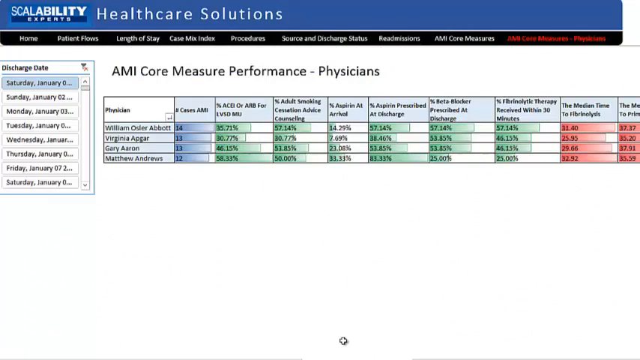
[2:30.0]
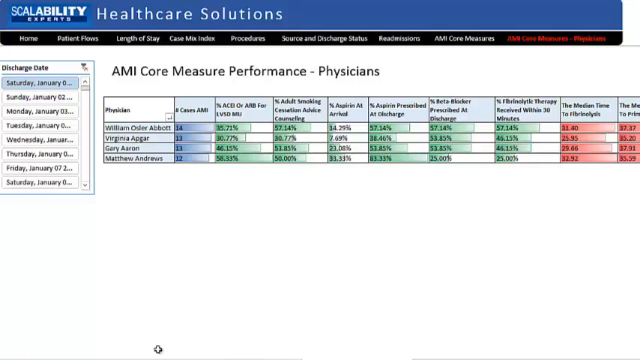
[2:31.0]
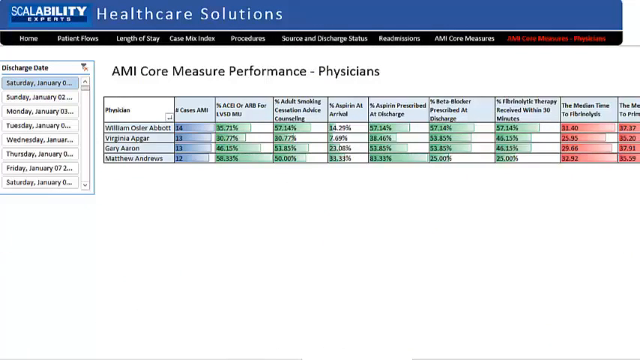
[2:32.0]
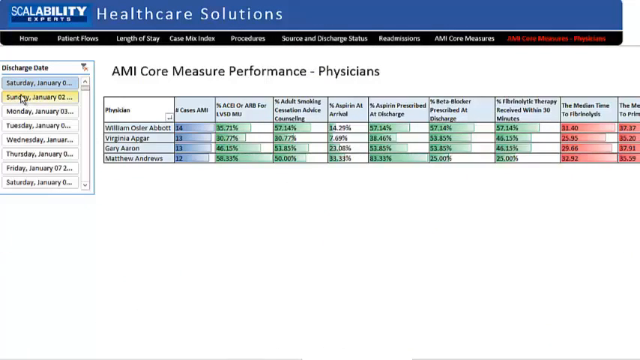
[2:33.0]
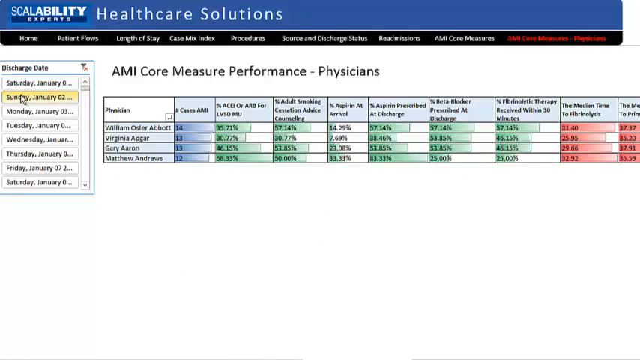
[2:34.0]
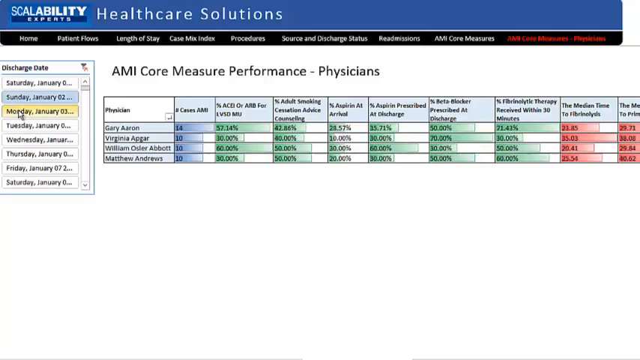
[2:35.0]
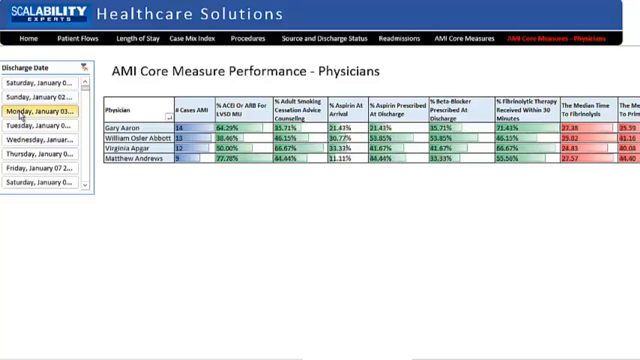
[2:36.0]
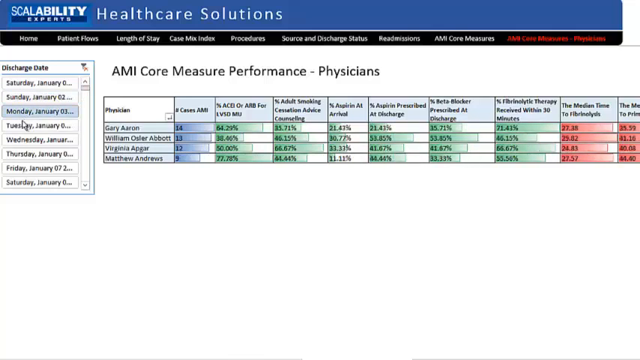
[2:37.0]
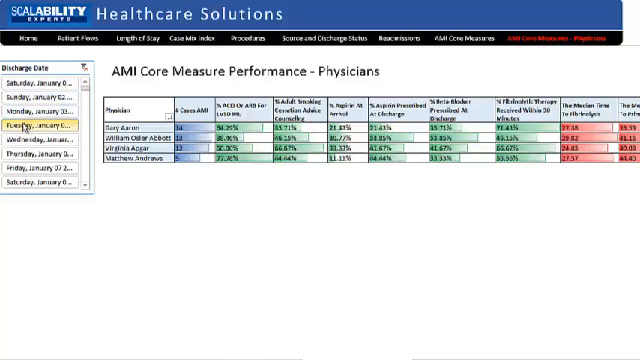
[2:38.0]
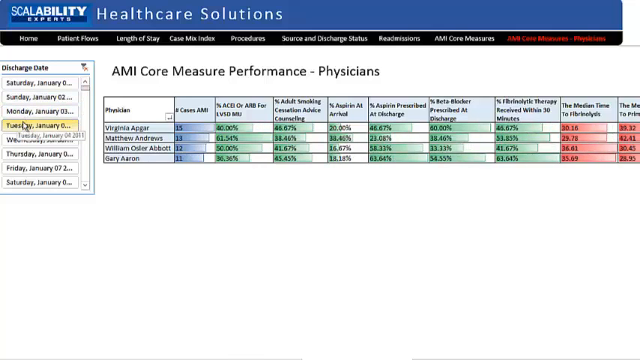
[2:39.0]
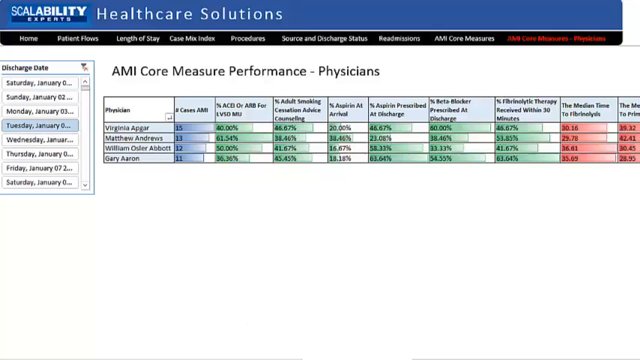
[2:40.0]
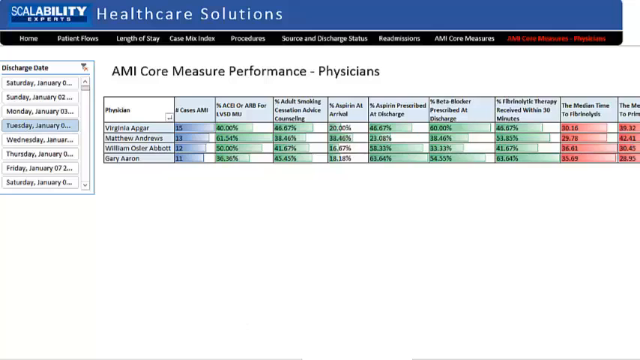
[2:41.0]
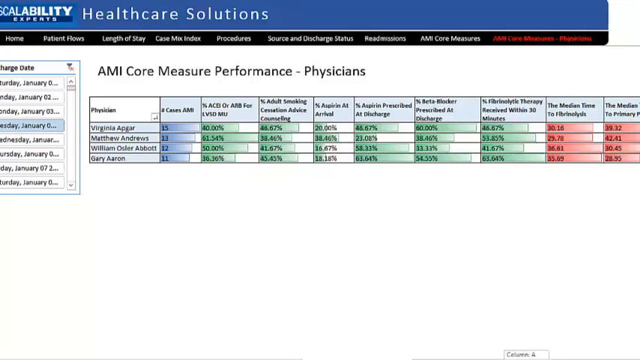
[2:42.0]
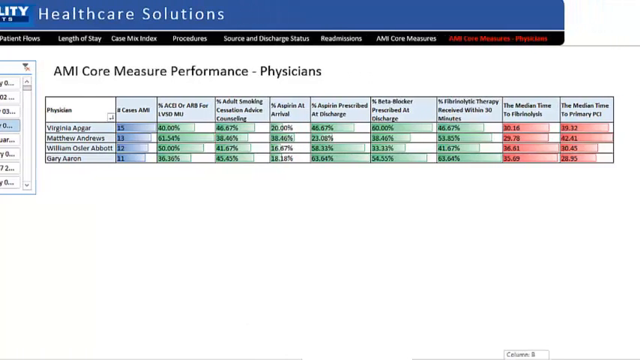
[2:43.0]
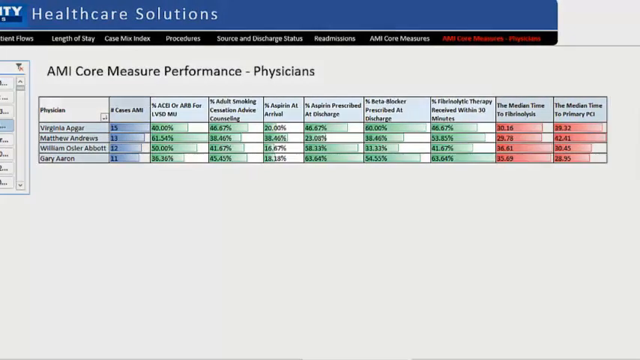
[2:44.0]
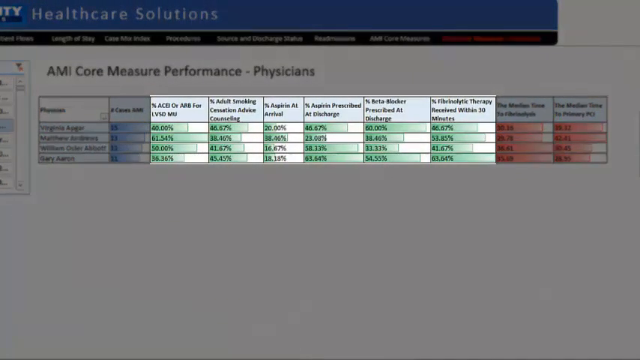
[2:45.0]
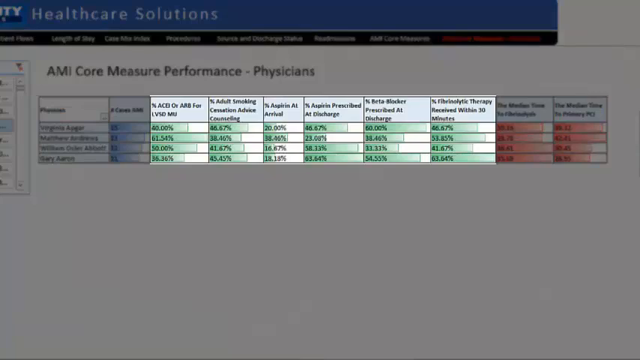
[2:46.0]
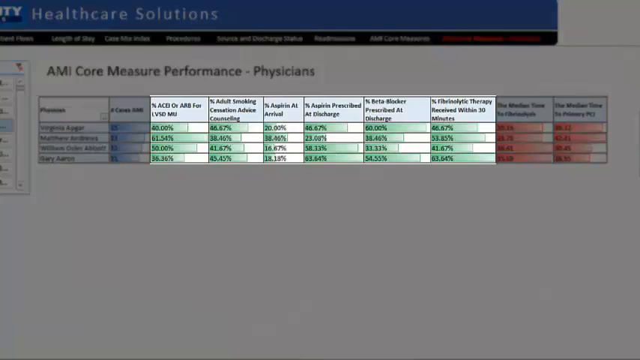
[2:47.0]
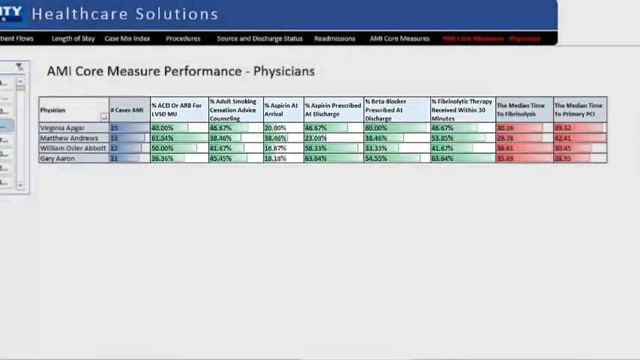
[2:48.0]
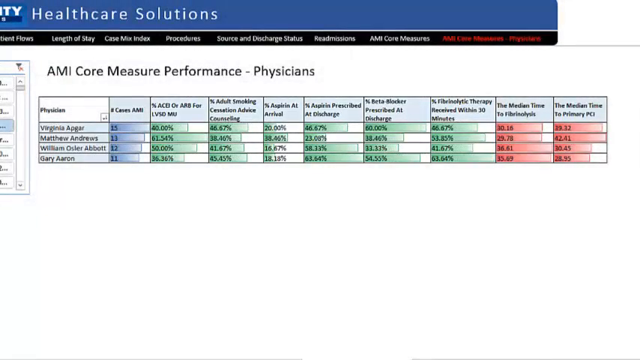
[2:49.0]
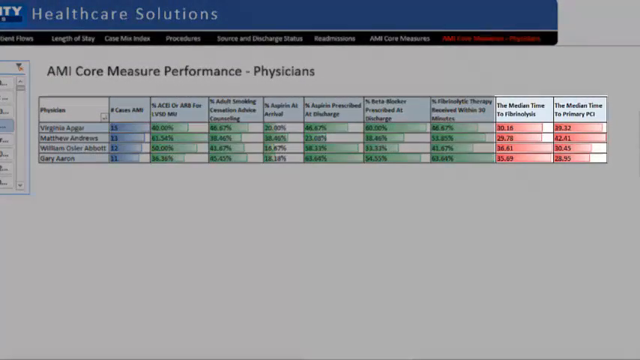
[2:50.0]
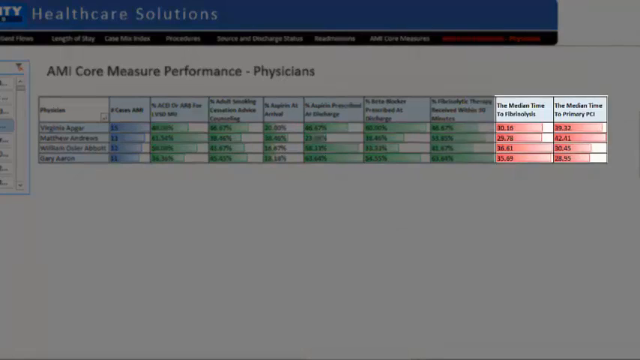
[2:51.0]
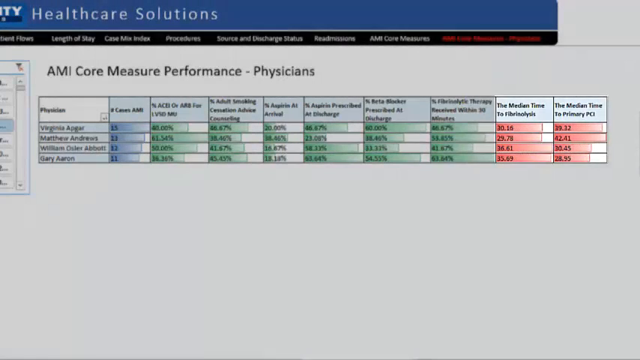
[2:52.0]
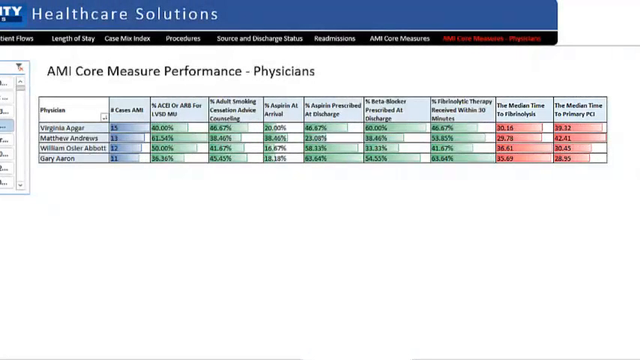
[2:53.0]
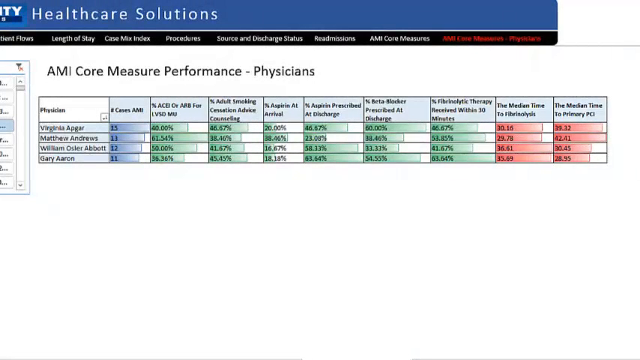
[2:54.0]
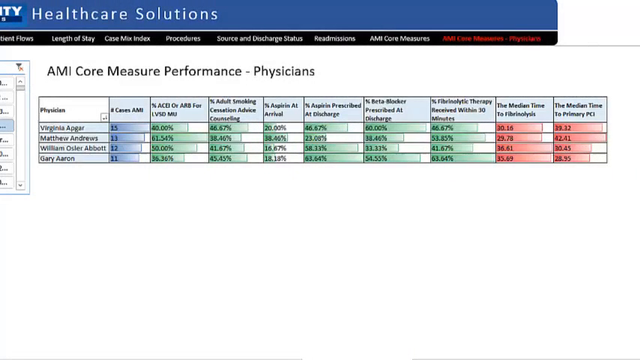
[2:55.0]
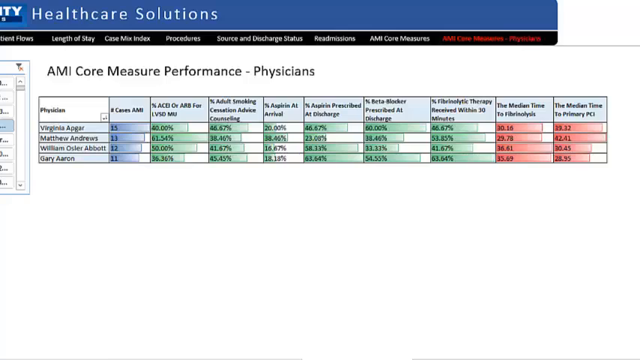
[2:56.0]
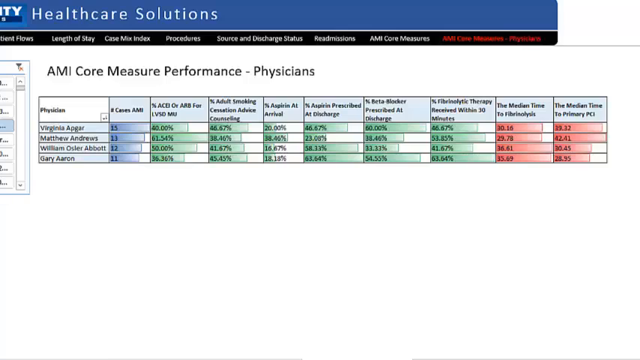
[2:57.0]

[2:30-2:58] The format is similar to the previous slide. The headline banner is a blue dialog box with the same words starting on its left-hand side: "scalability experts", which looks to be a logo, and to its right the title "healthcare solutions". Beneath it is a black background with probably ten equally spaced columns, in white lettering except for the last two, which take up the last 20% of the space and are in red lettering. Below that is a chart not seen before, with the title bar "AMI core measure performance-physicians". Underneath is a chart with 10 columns and four rows. Six of the columns show numbers in black type, each followed by a percentage sign and each set inside a green rectangle, so each such column has four values, all in black with a percentage sign, in green rectangular boxes across each row.